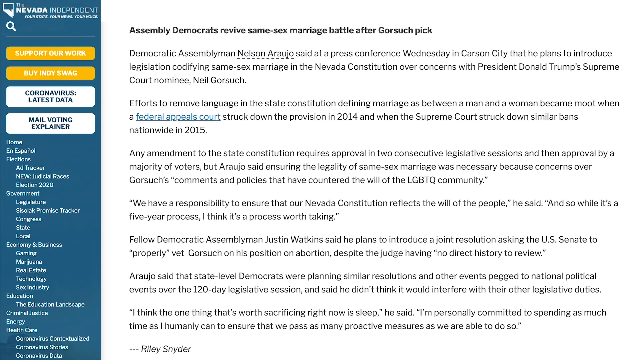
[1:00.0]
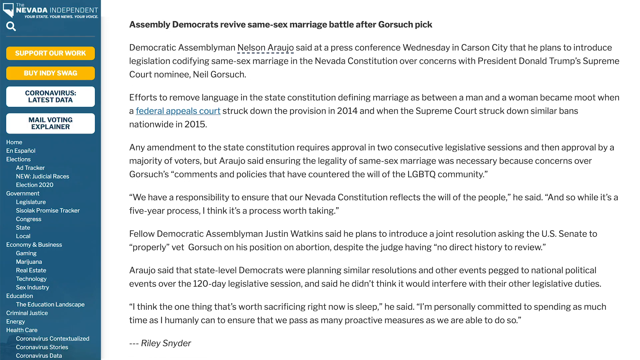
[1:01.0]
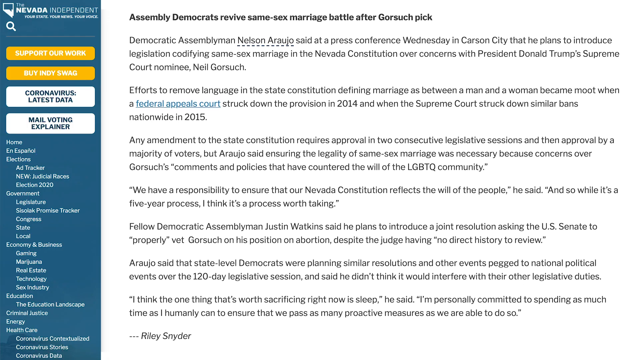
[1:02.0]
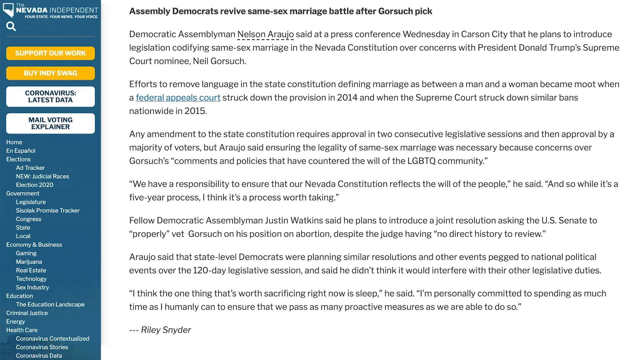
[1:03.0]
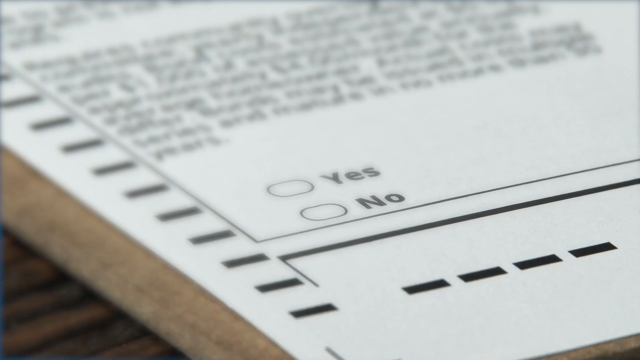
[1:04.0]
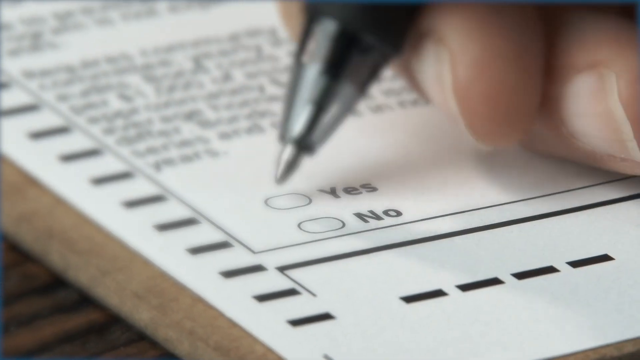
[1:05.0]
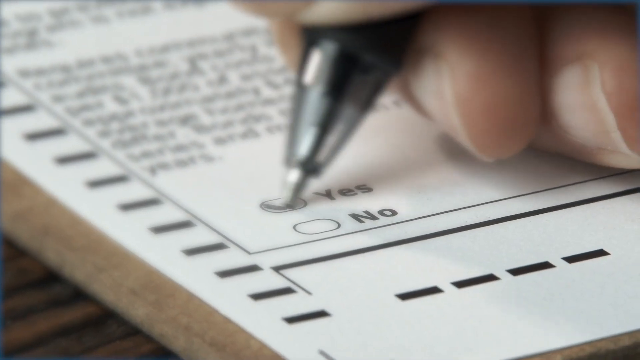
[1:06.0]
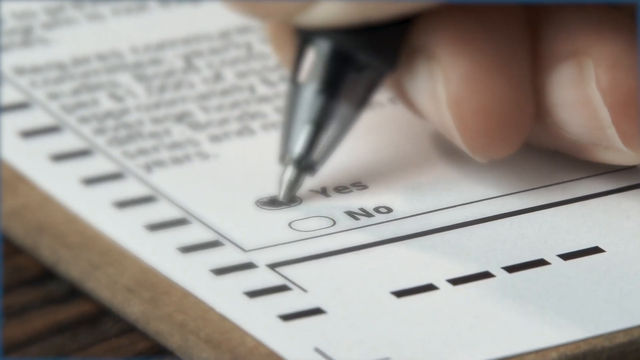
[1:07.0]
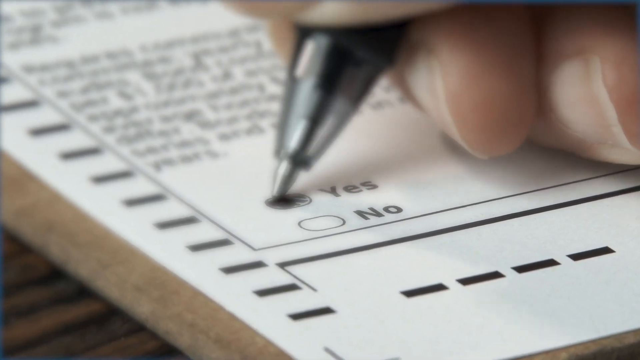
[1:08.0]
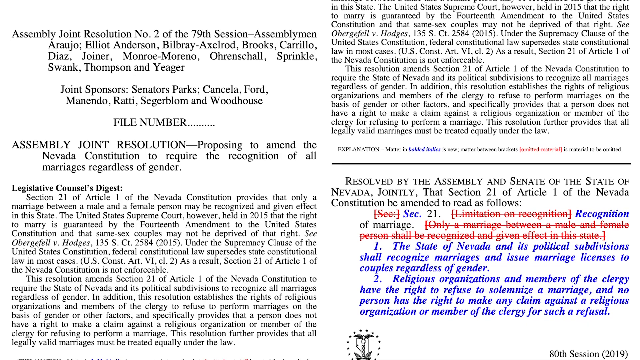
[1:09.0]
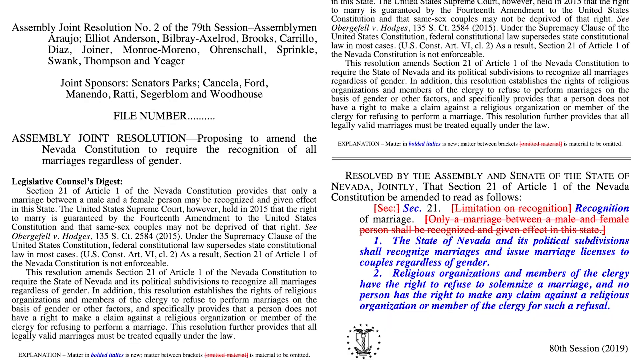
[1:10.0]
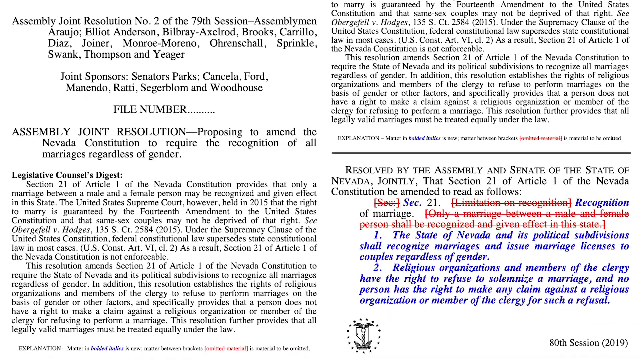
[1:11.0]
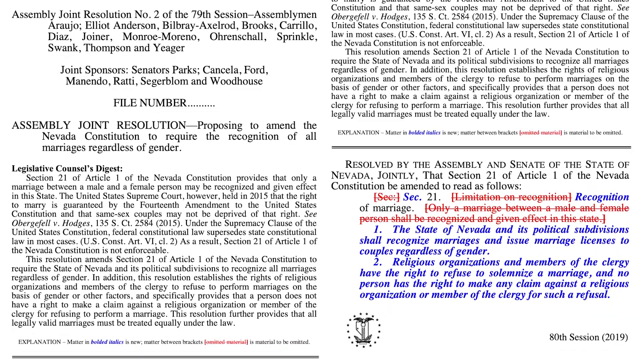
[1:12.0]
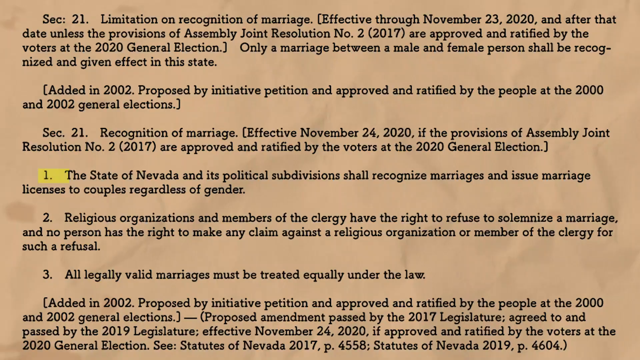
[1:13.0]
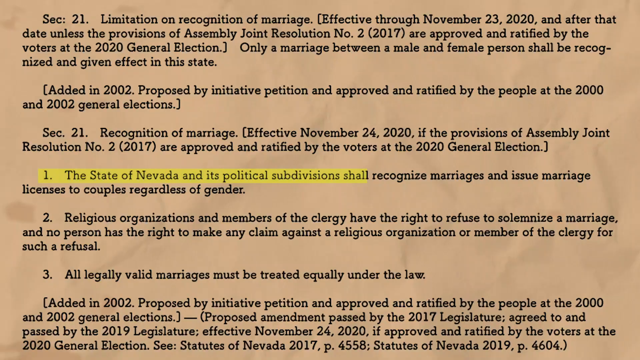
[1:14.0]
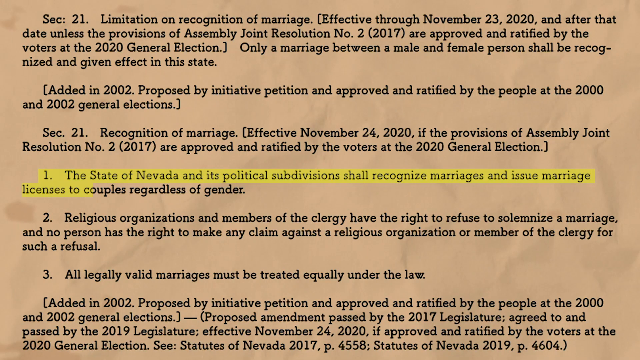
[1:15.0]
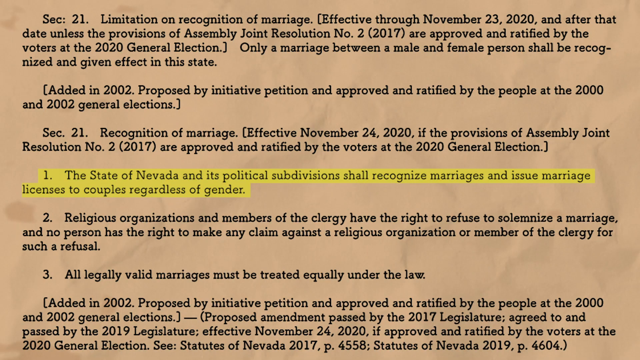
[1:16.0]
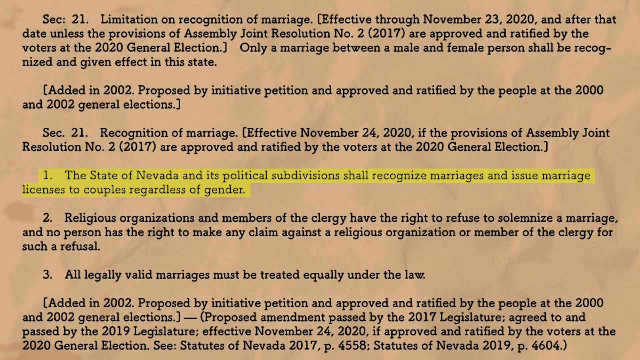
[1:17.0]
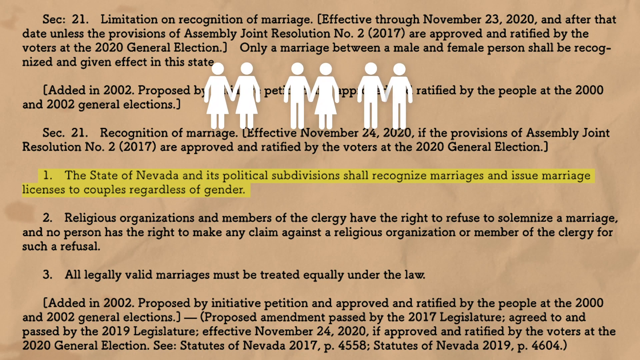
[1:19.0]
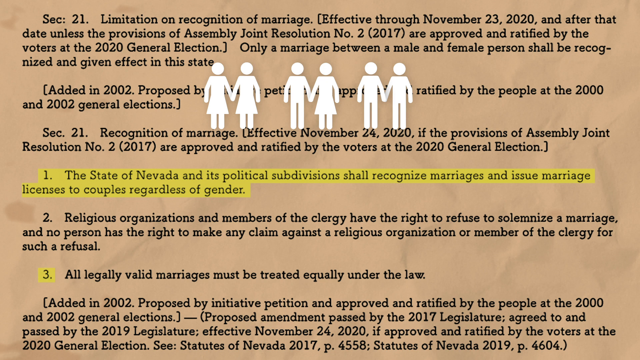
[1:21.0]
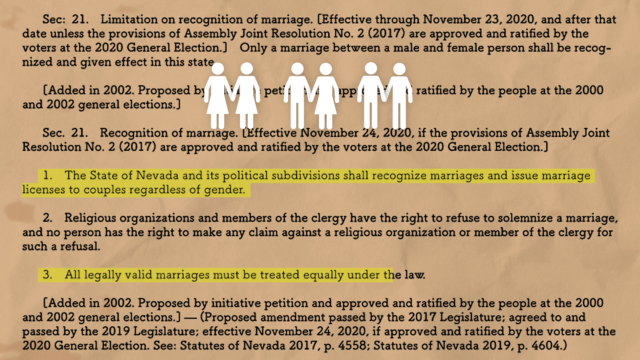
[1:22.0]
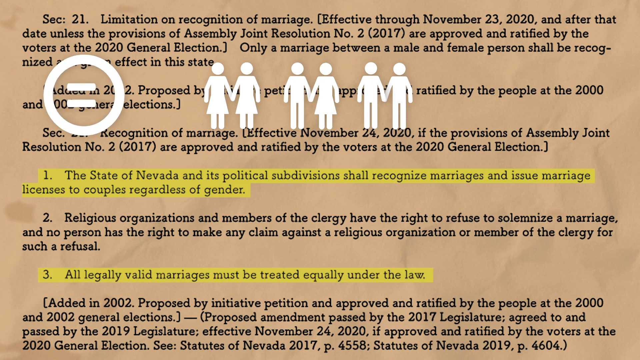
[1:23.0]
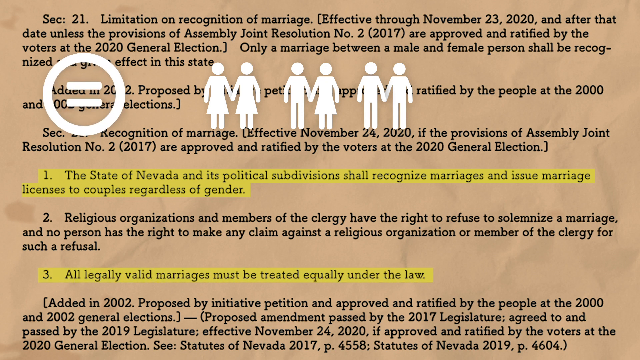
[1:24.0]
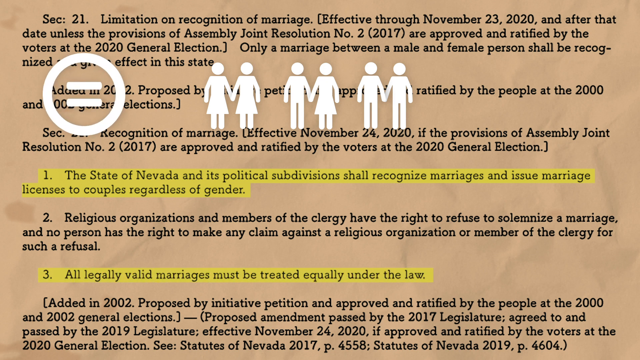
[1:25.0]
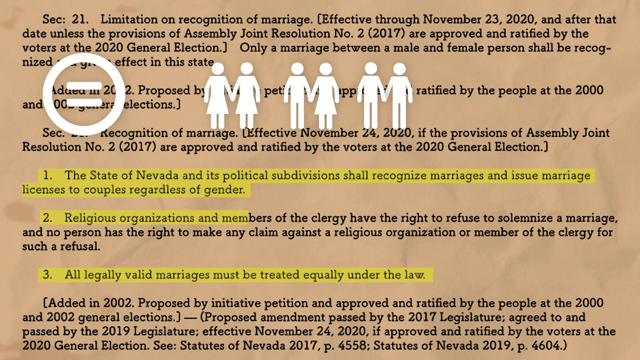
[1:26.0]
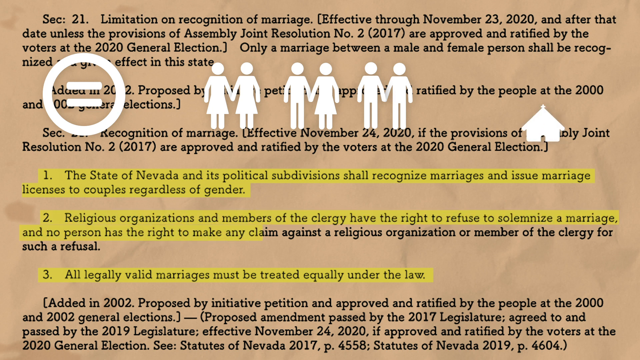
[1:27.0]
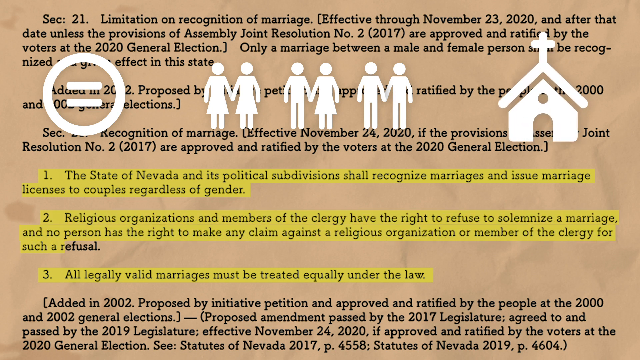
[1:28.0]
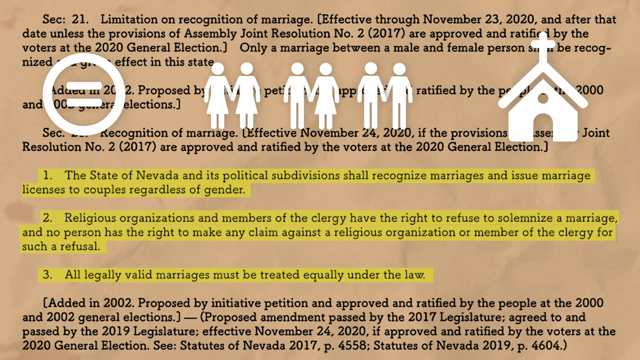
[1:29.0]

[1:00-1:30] A logo in the left corner shows that the site is the Nevada Independent, along with the site's menu options. In the middle is an article headlined "Assembly Democrats revive same-sex marriage battle after Gorsuch." Its text says that Assemblyman Nelson Arrujo said at a press conference Wednesday in Carson City that "he plans to introduce legislation codifying same-sex marriage in Nevada Constitution over concerns with President Donald Trump's Supreme Court nominee Neil Gorsuch," and that efforts to remove language in the state constitution defining marriage between a man and a woman ended when a federal appeals court struck the provision in 2014 and the Supreme Court struck down similar bans nationwide in 2015. Next, a person signs a white document written in black.